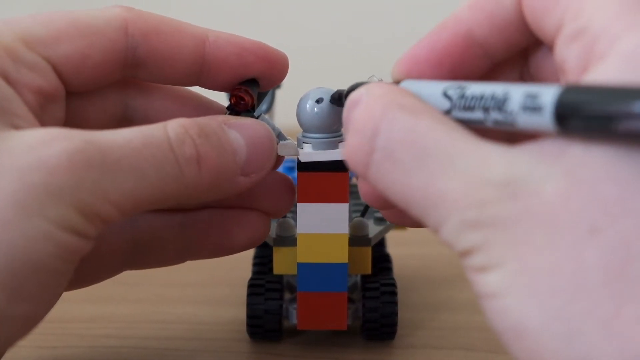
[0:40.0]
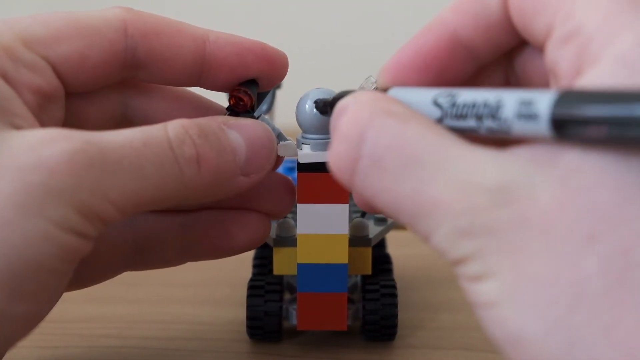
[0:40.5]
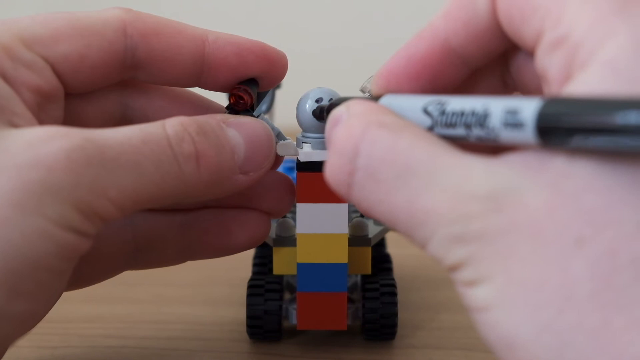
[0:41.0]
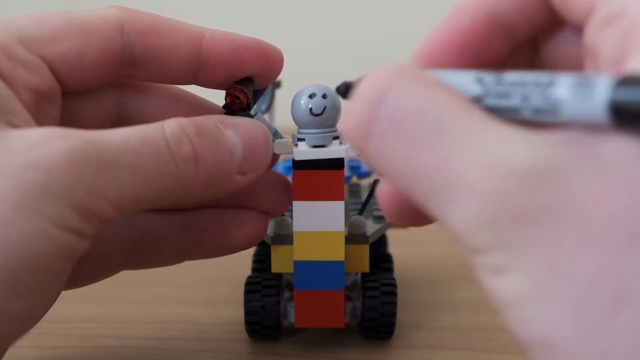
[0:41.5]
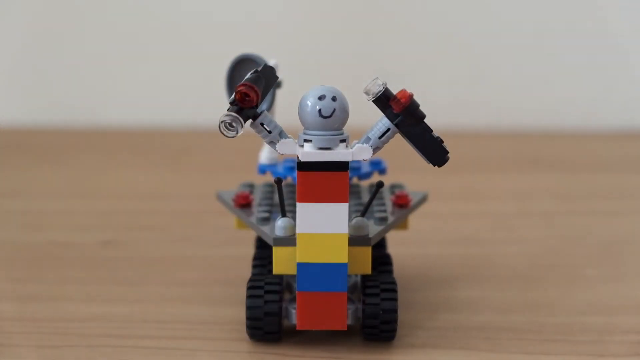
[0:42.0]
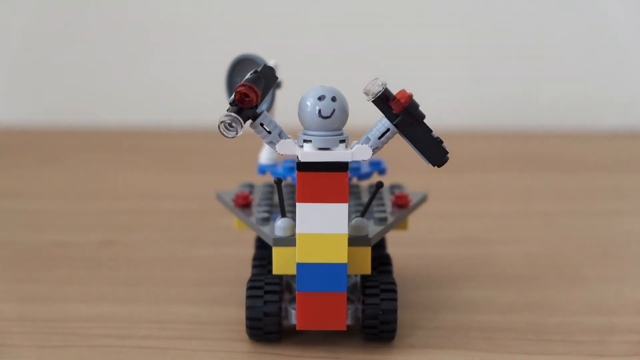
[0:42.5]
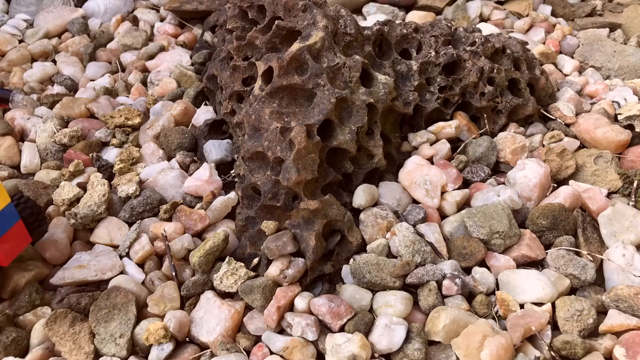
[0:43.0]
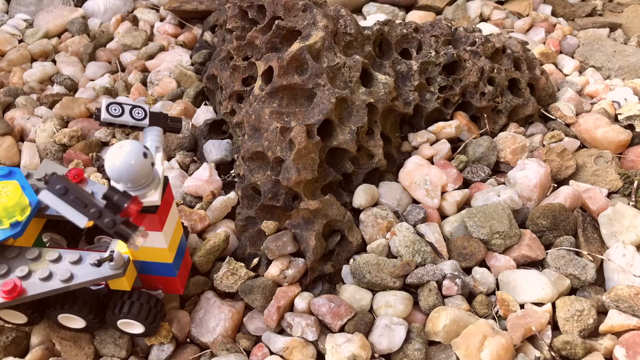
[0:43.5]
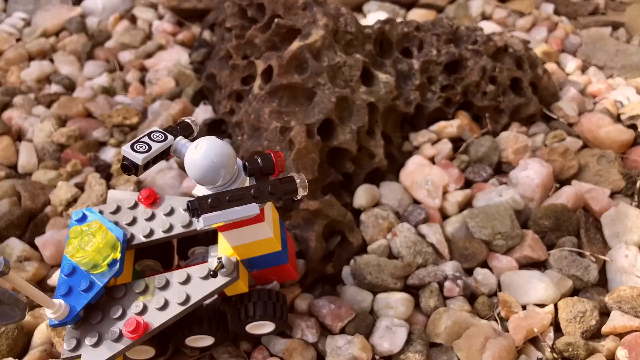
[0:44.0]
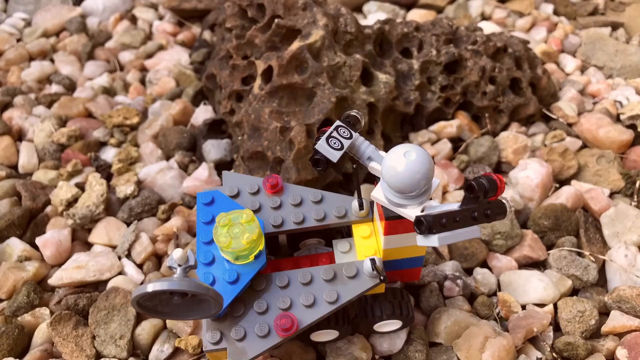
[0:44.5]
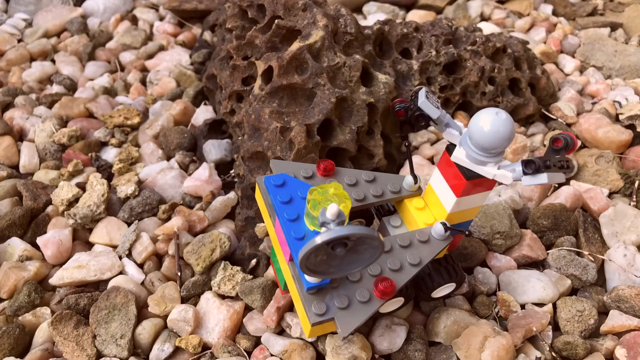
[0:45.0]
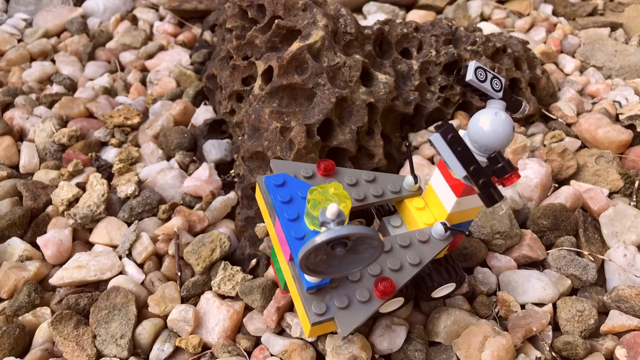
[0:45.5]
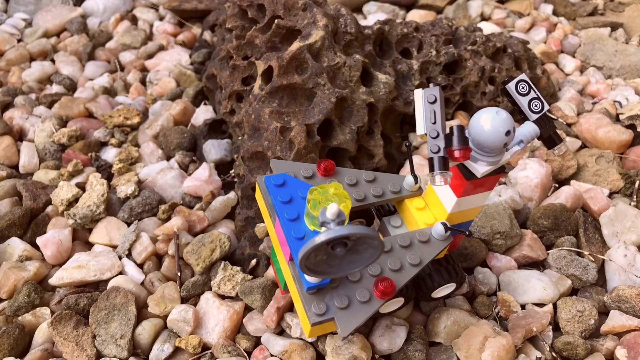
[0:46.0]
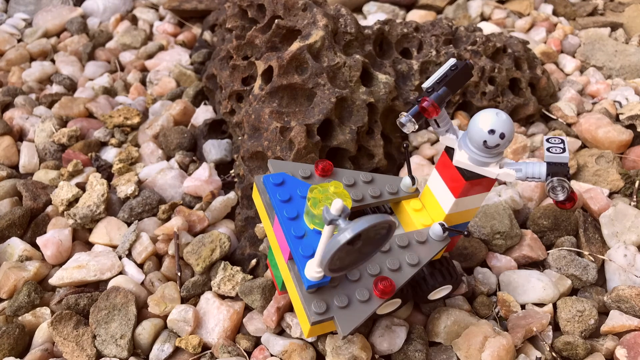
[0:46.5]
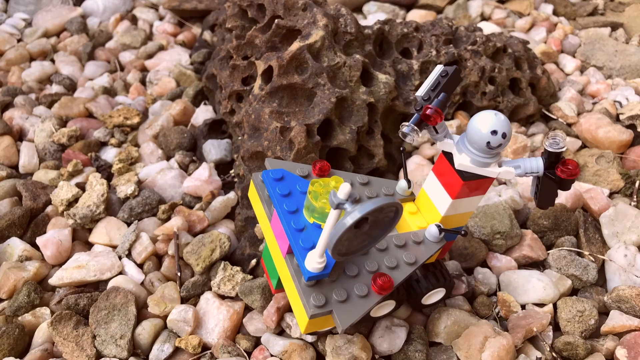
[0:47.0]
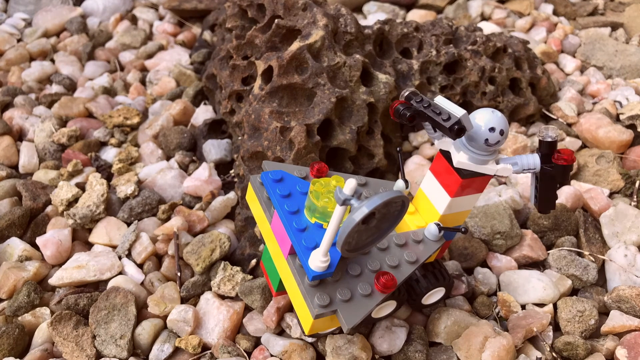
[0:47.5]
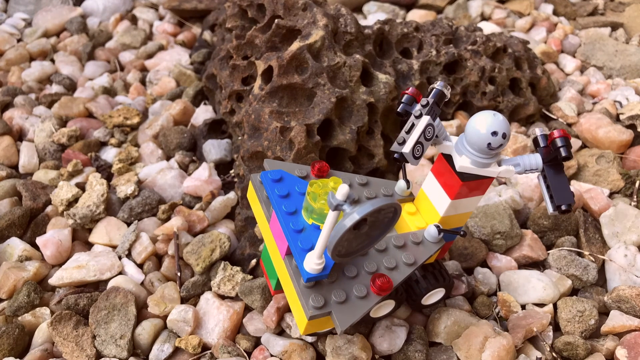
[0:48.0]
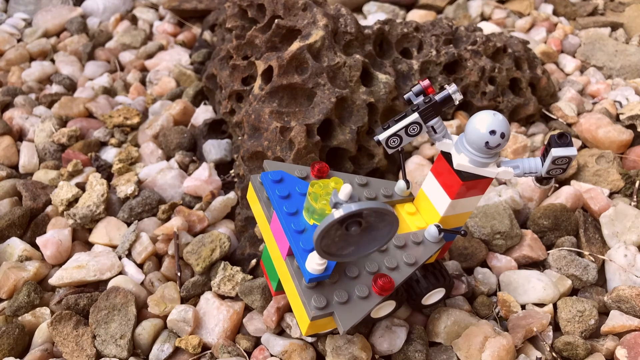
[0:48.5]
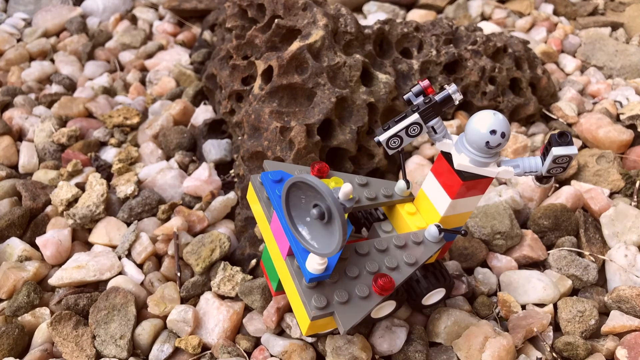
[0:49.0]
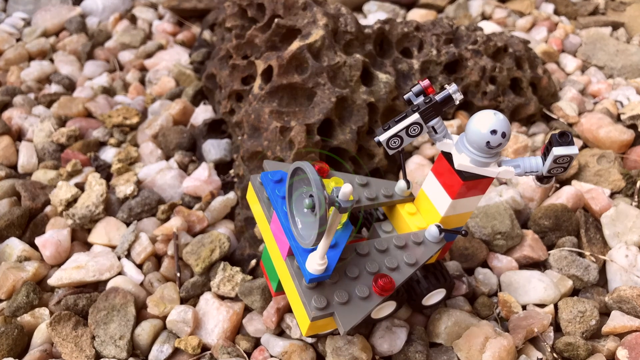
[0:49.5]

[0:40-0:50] Someone has built a little robot out of Legos and draws a face on it with a permanent marker. The person drawing appears Caucasian, judging by their skin tone. The smiley face is just two dots for eyes and an upward curve for the smile. Once the face is done, the robot seems to come to life, moving and spinning: different parts of it move, including its arms and a satellite that has been built onto it. It is on a rocky surface, with an almost spongy-type brown material in the background.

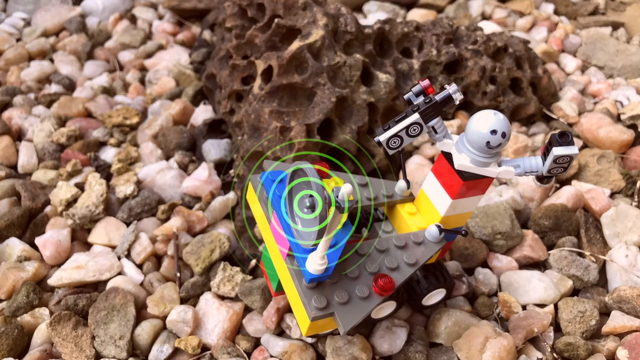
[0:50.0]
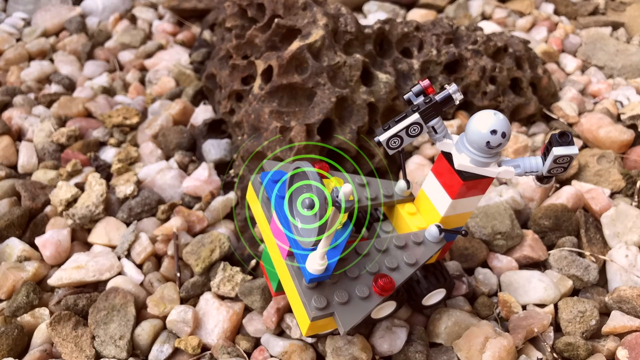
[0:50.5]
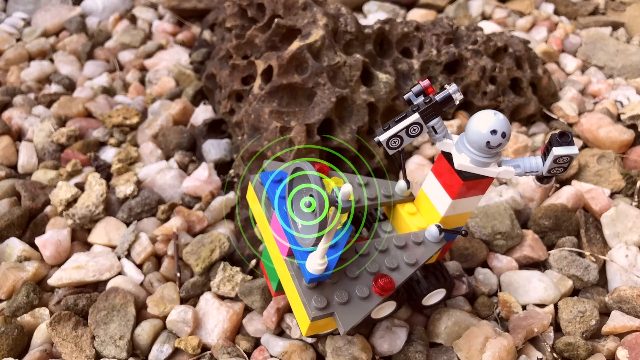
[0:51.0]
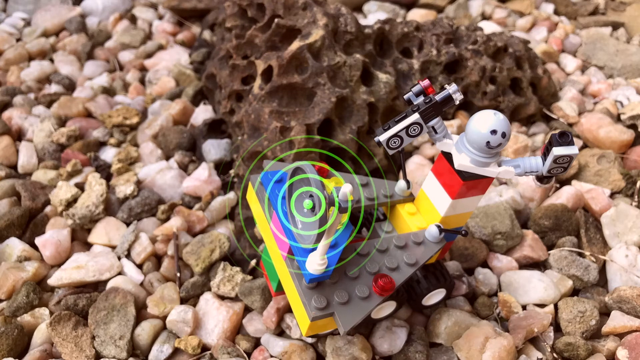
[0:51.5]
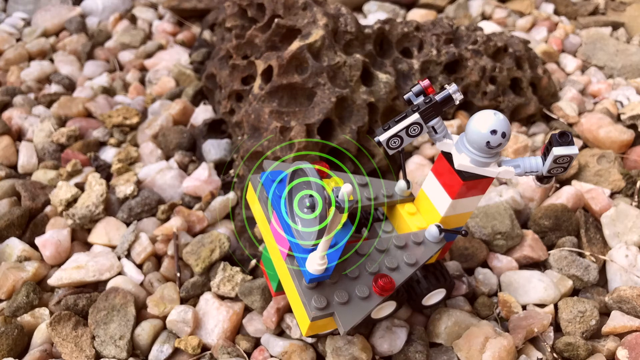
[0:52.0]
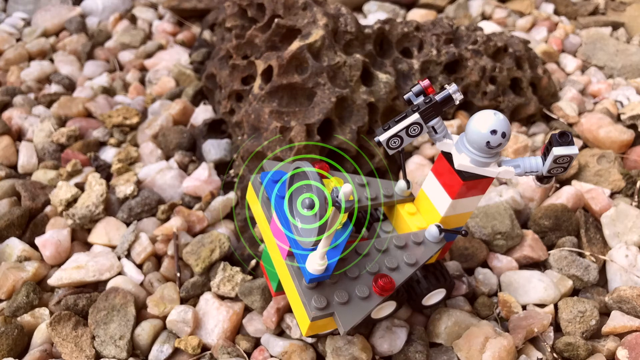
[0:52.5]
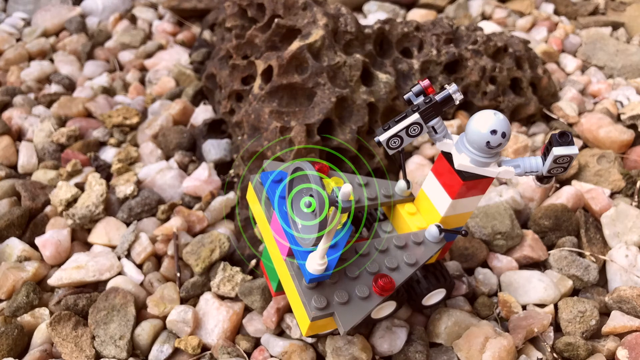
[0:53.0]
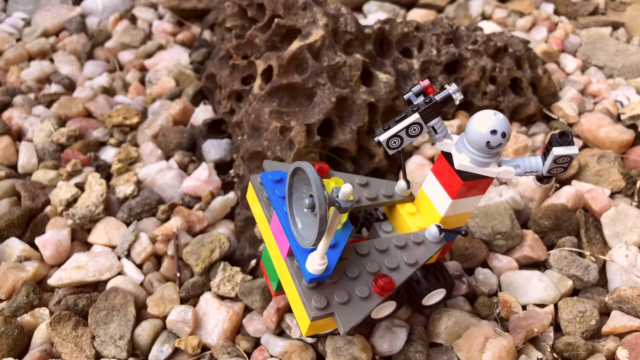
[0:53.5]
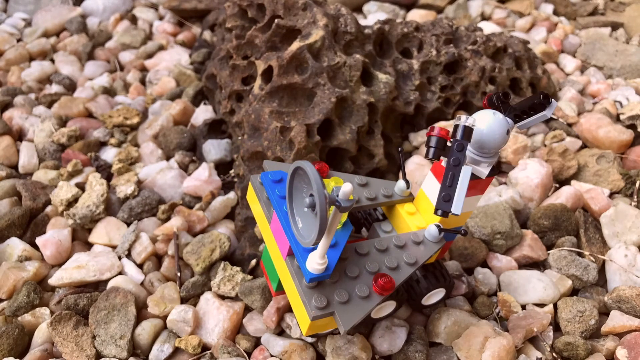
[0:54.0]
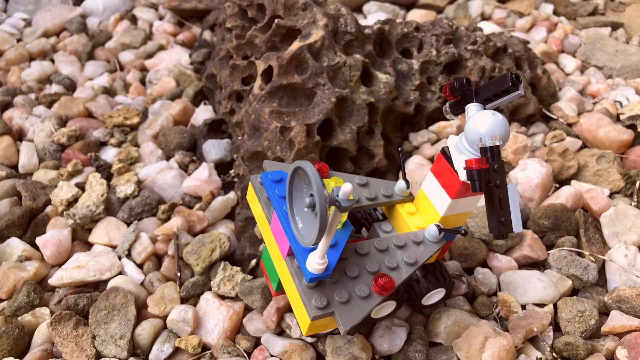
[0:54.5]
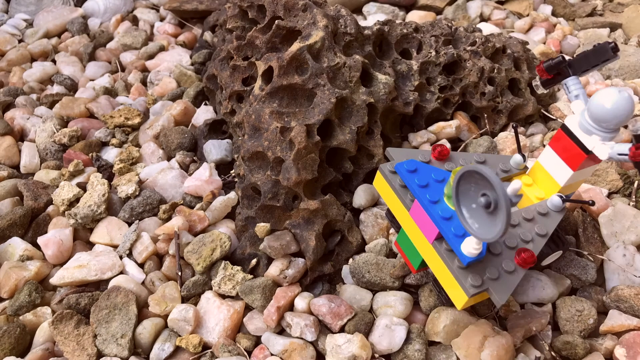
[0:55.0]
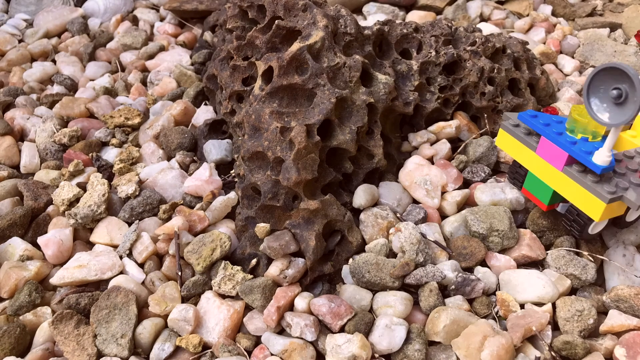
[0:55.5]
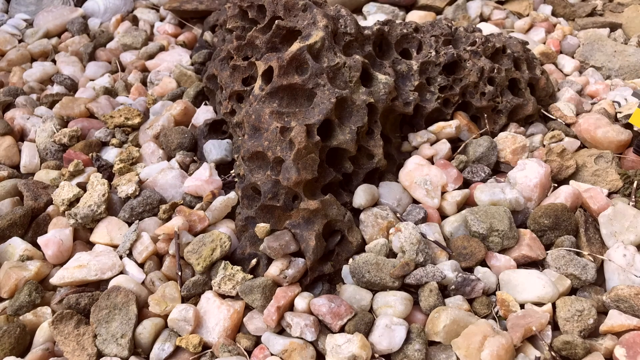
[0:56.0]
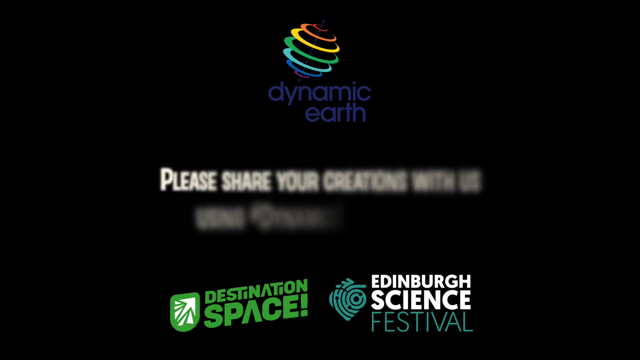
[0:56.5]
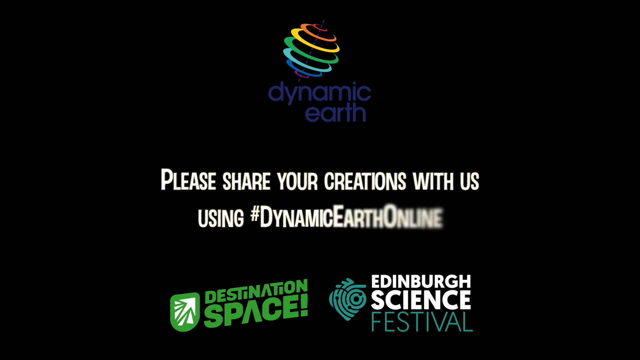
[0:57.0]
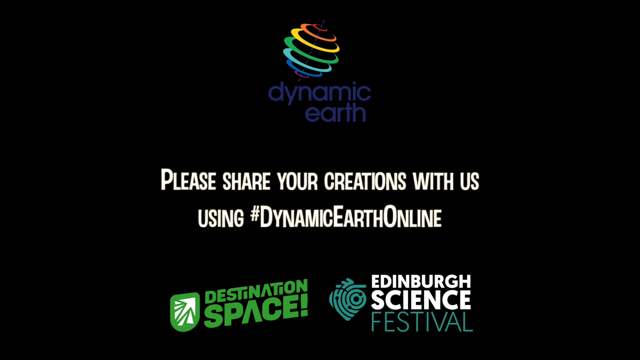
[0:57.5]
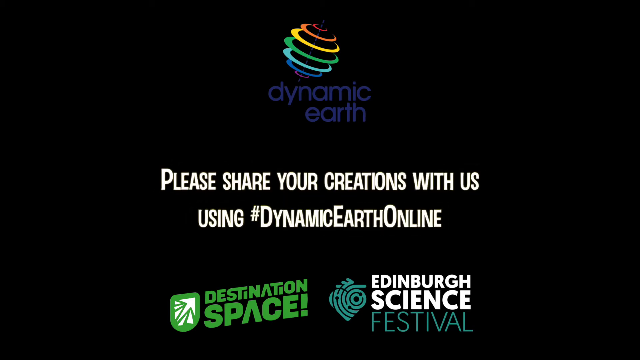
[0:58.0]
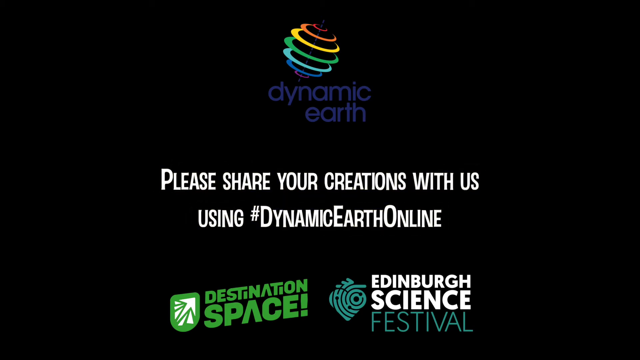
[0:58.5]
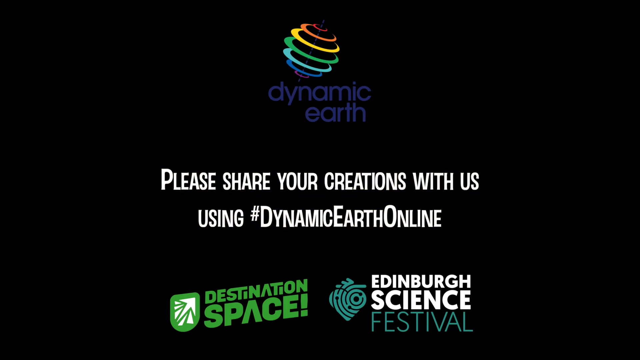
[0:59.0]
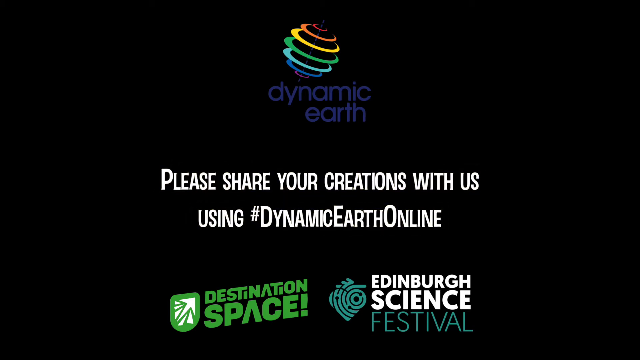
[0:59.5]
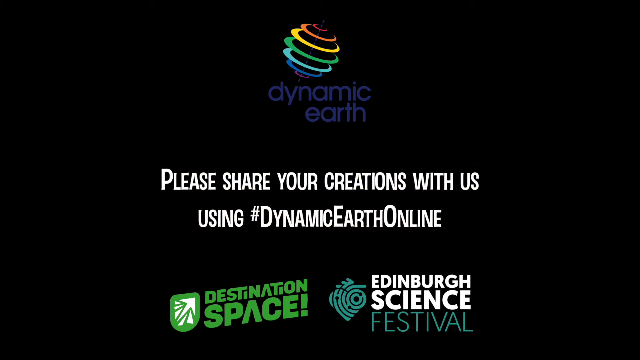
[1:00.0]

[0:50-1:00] The Lego robot moves across a pile of rocks near a spongy-like material. Lines are drawn coming out of something like green circles on the satellite, almost as if it is sending out a signal. At the very end, kind of rainbow circles come together to make a sphere for the Earth, and the text "dynamic earth" appears. White print then reads "please share your creations with us using #dynamic earth online", and at the bottom the text reads "destination space, Edinburgh science".